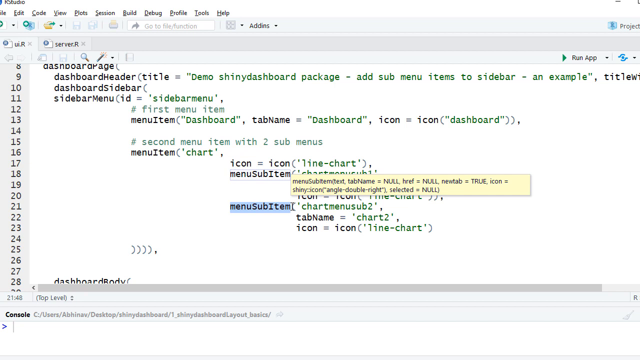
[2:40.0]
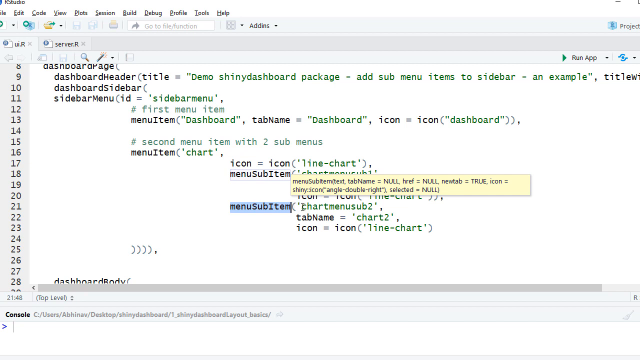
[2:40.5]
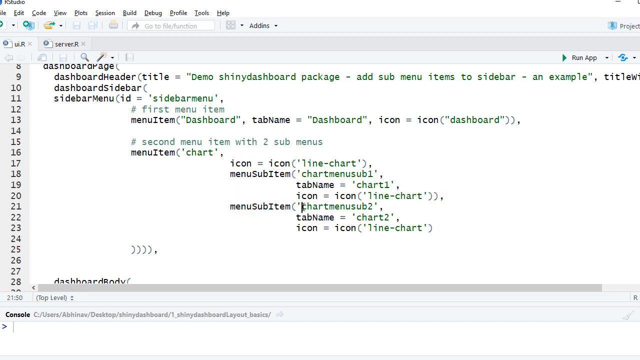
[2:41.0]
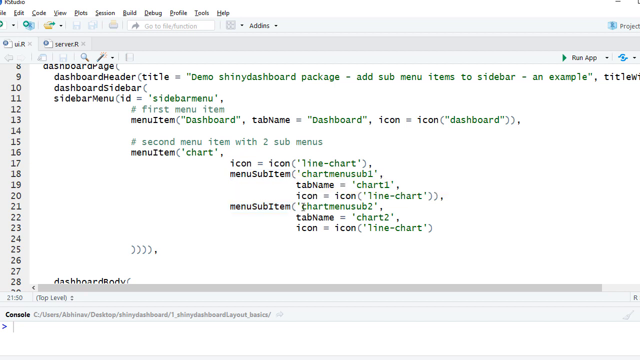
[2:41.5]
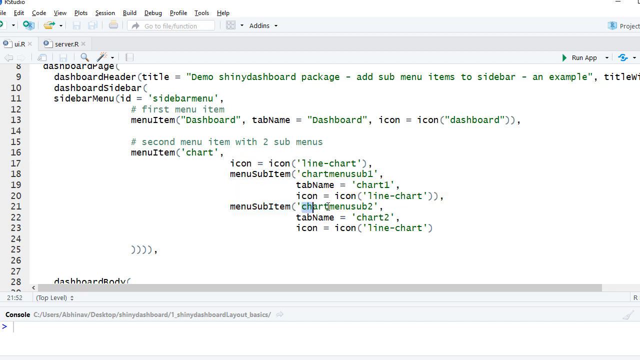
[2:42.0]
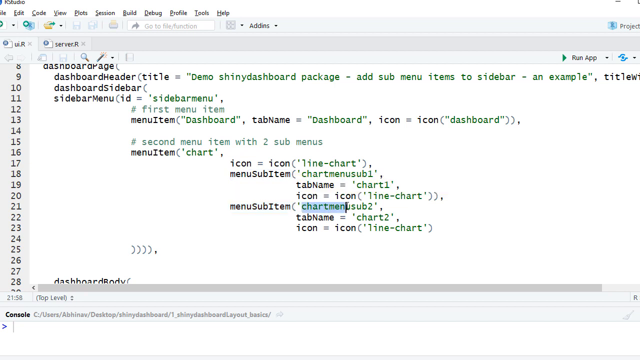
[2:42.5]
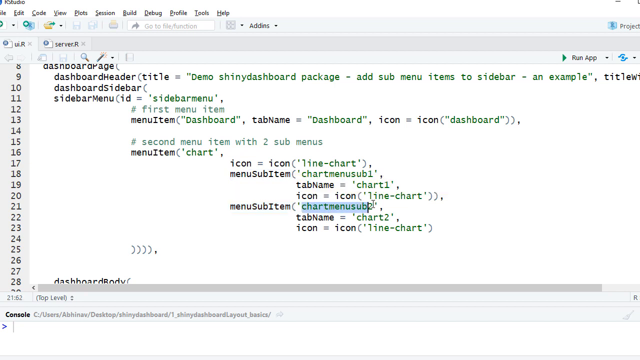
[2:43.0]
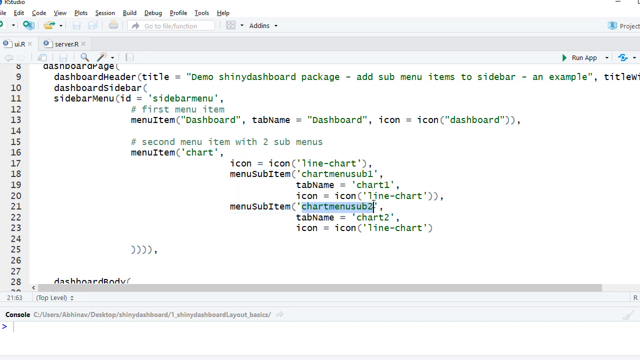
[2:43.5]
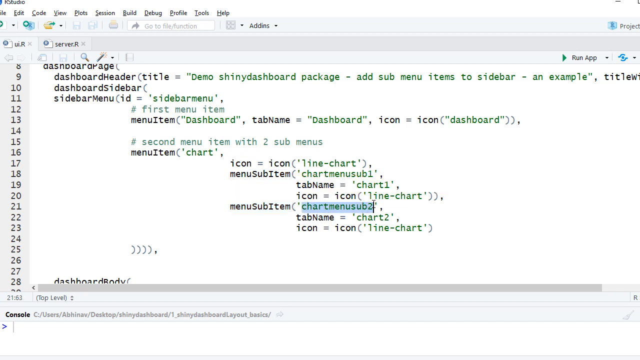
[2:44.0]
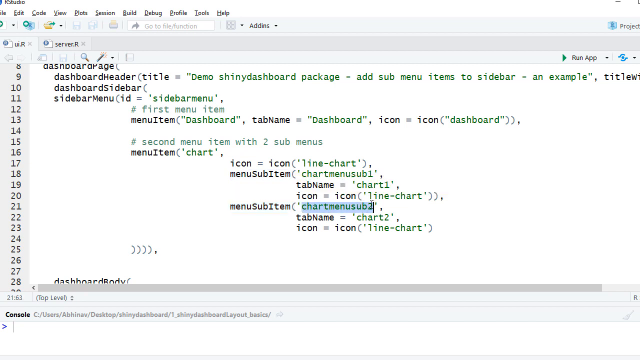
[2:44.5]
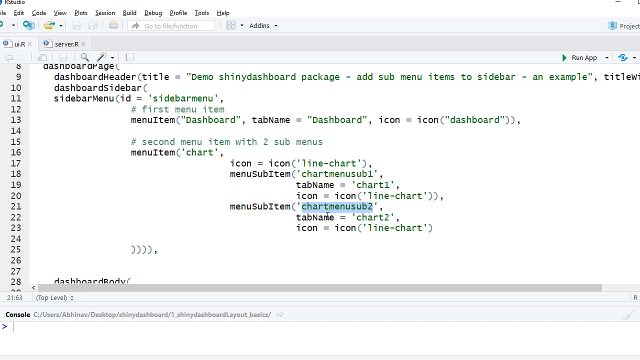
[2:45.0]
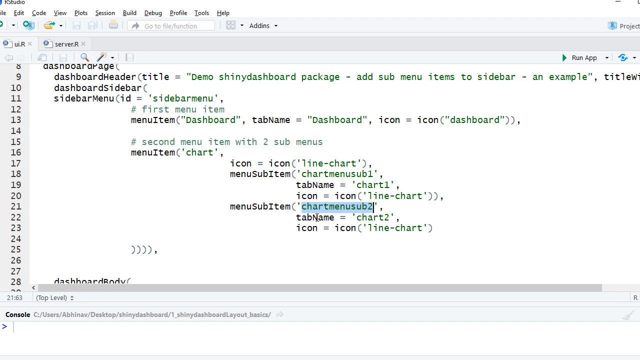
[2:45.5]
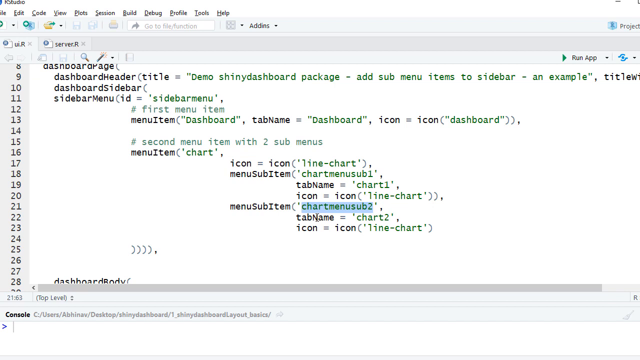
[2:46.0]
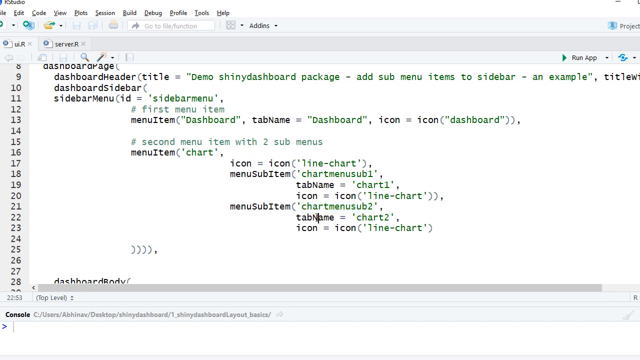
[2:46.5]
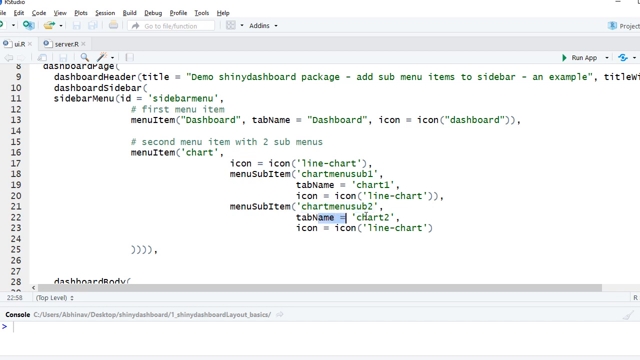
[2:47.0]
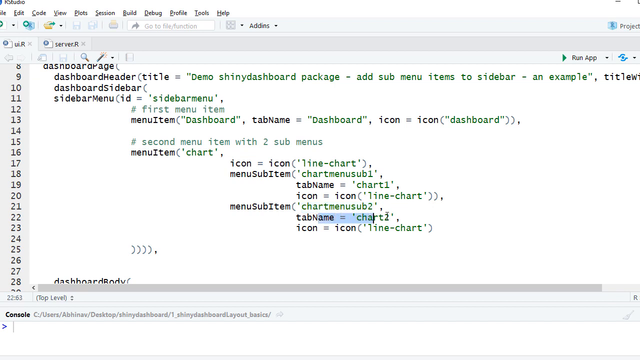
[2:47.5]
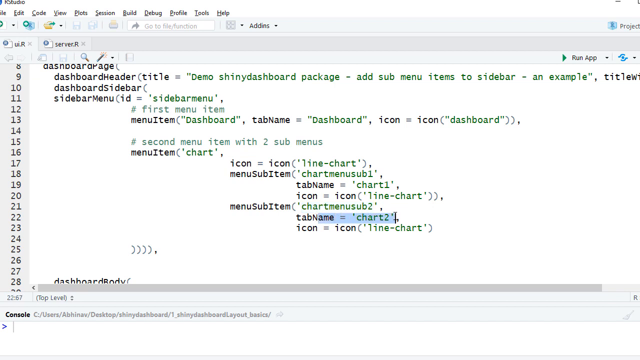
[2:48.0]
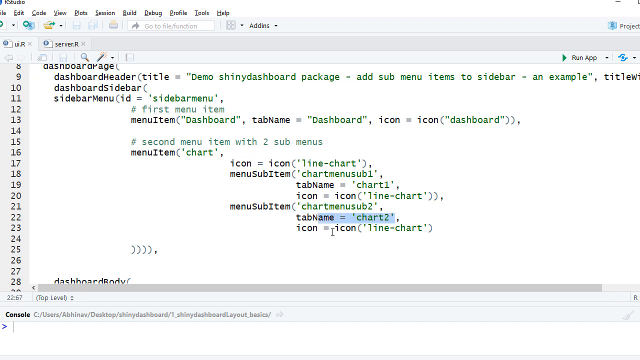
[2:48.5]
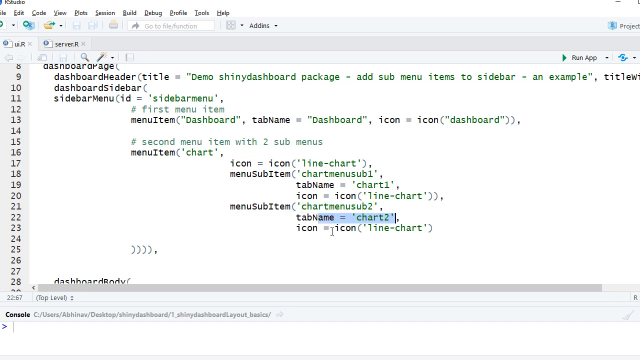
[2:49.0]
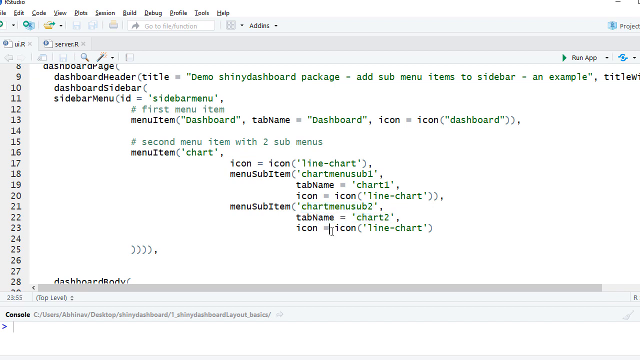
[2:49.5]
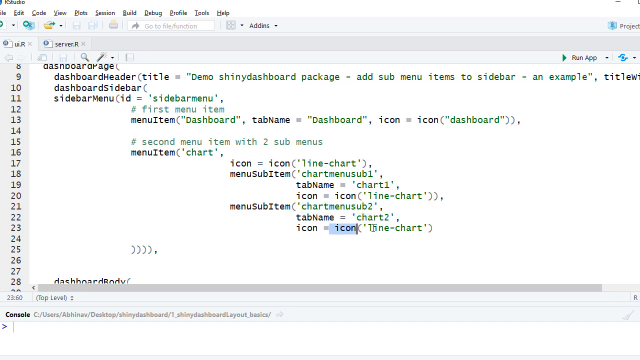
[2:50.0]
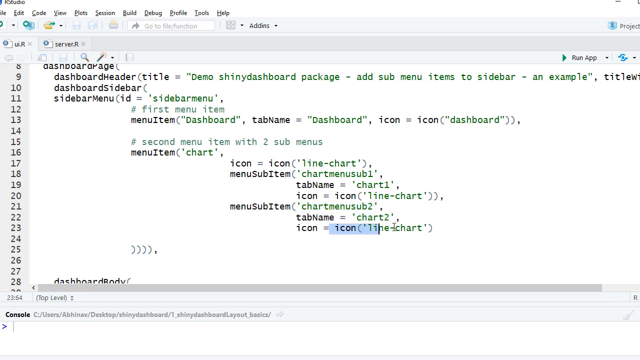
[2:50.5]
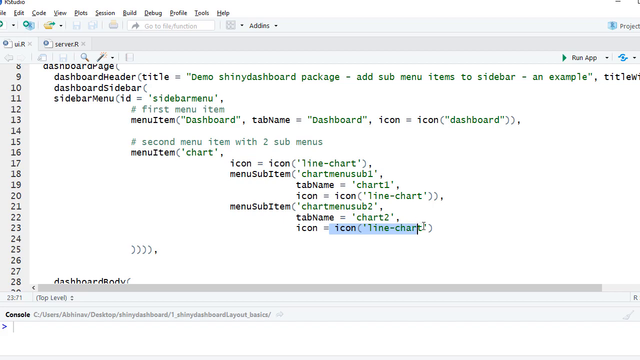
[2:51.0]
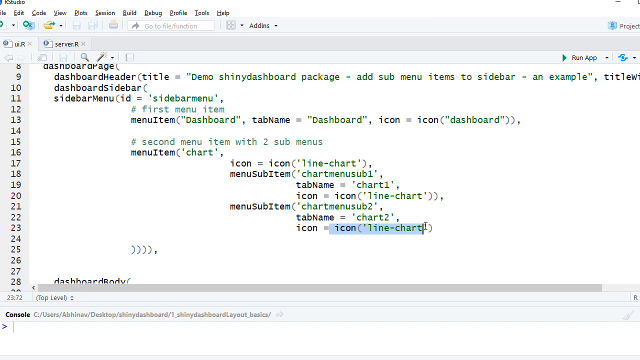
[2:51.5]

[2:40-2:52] The computer tab bar with file, edit and so on runs along the very top, and the rest of the screen is a white backdrop showing lines 8 to 28, with black lettering on the left-hand side and green lettering on the right-hand side. Recognizable words include dashboard, header, demo, chart, menu item and menu sub-item. The user highlights "chart 2" and then "icon line chart."